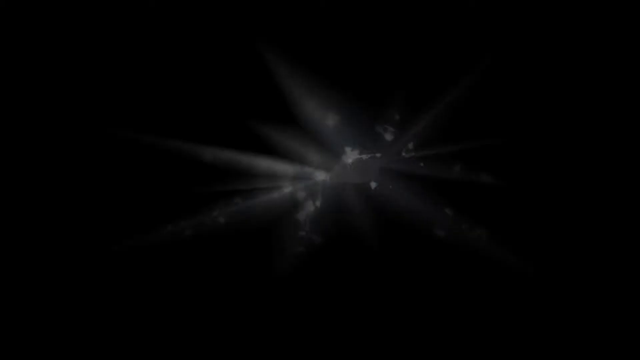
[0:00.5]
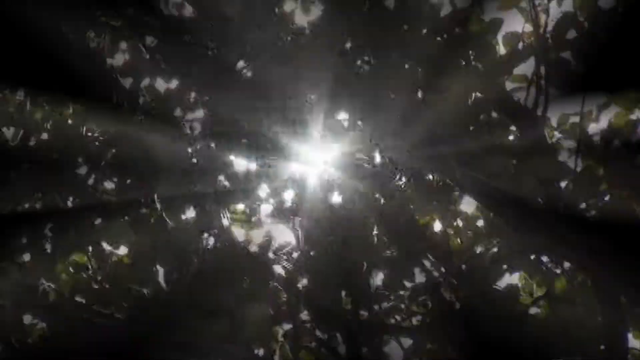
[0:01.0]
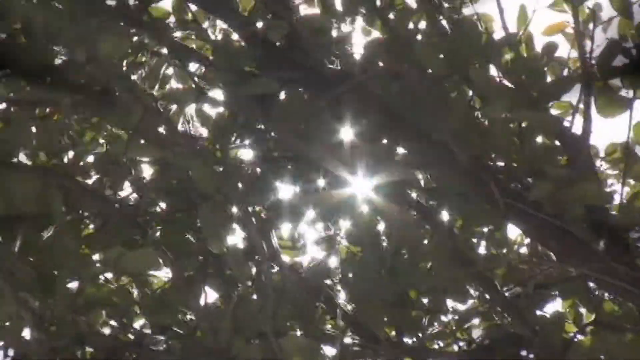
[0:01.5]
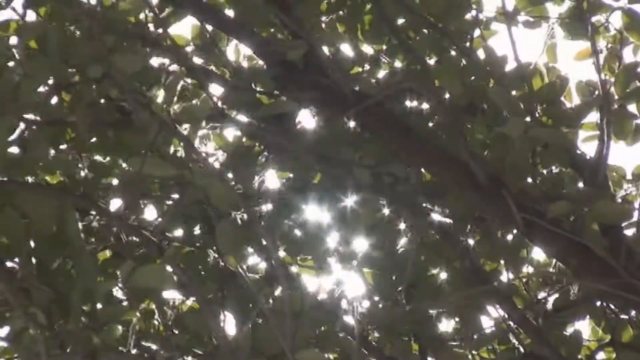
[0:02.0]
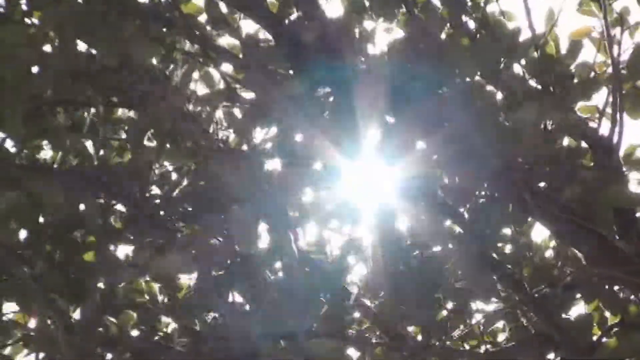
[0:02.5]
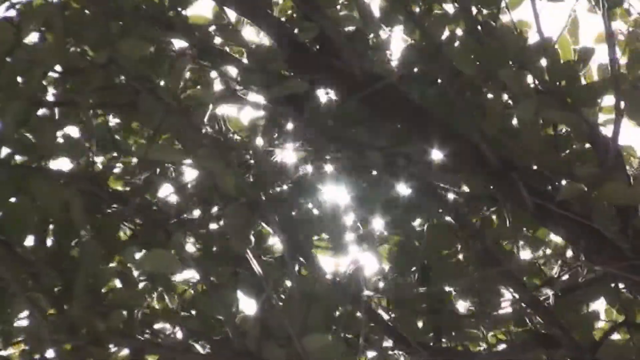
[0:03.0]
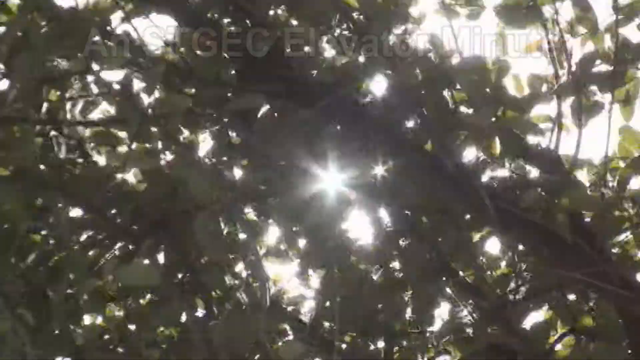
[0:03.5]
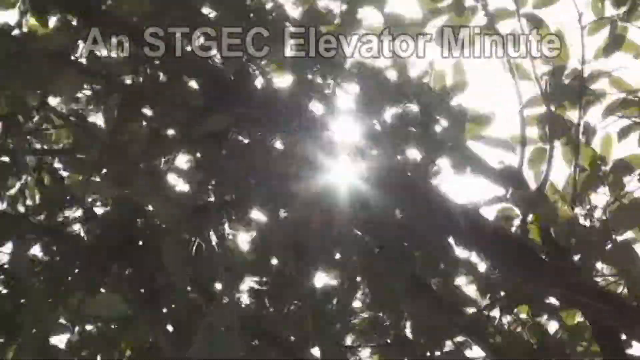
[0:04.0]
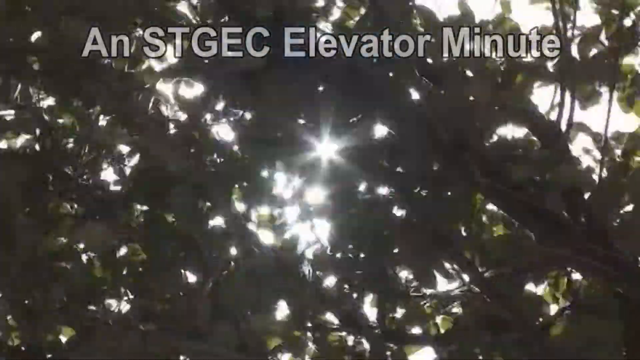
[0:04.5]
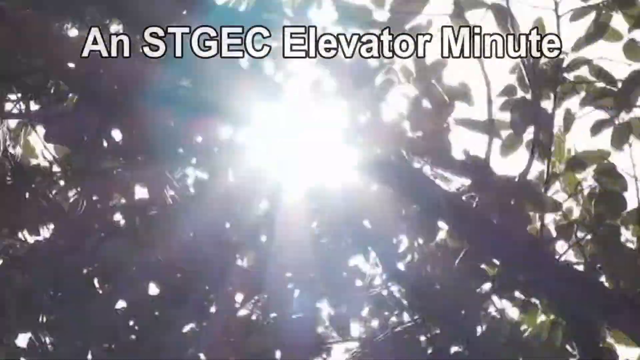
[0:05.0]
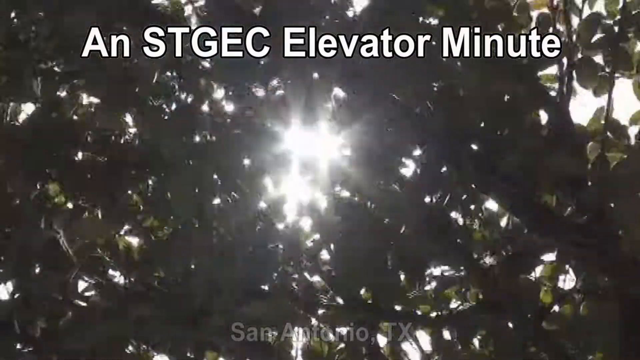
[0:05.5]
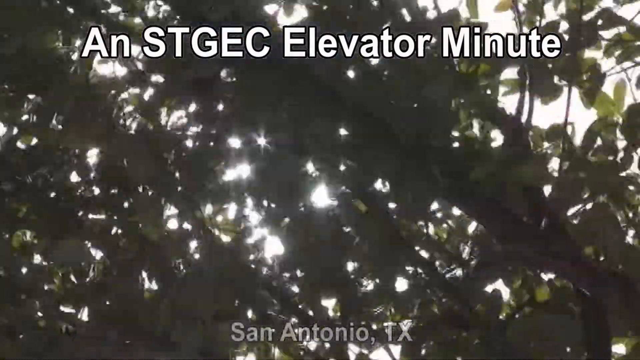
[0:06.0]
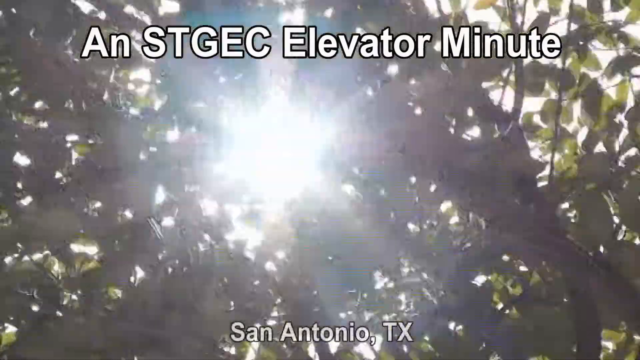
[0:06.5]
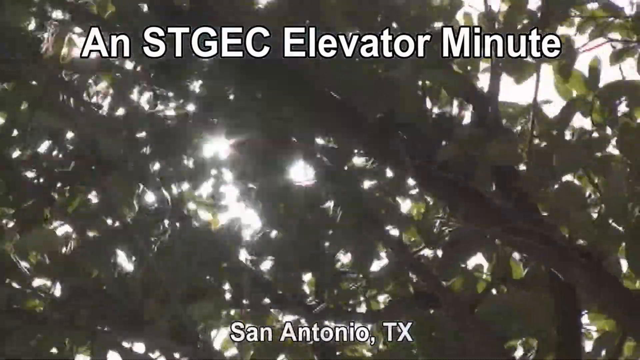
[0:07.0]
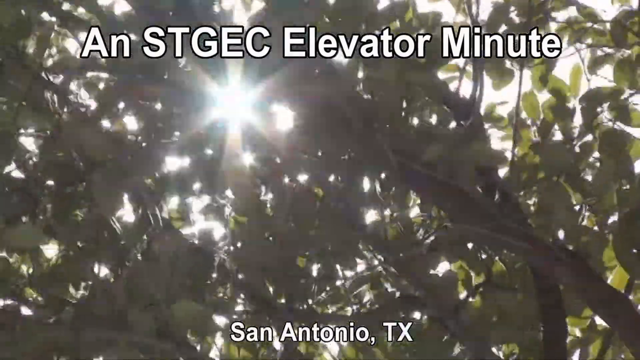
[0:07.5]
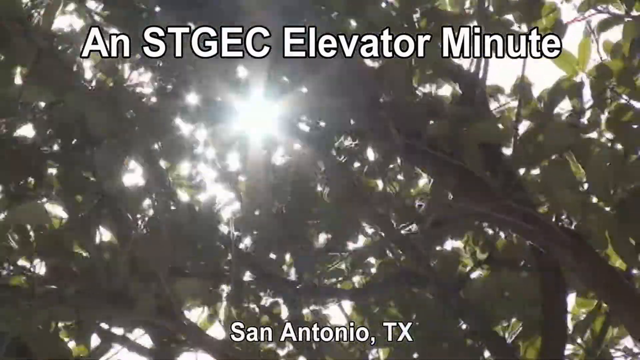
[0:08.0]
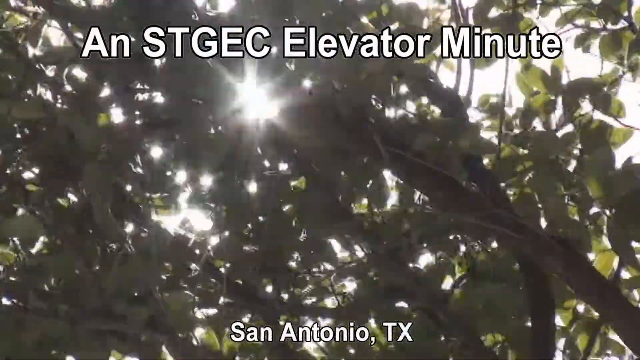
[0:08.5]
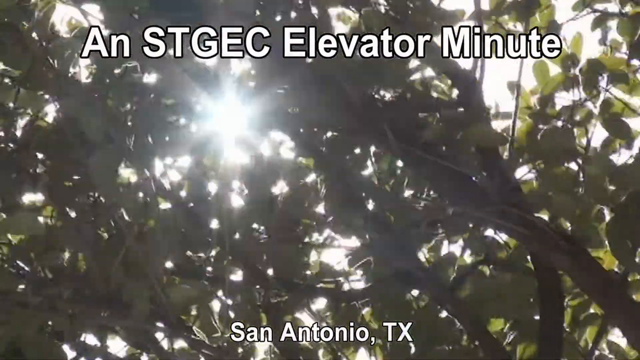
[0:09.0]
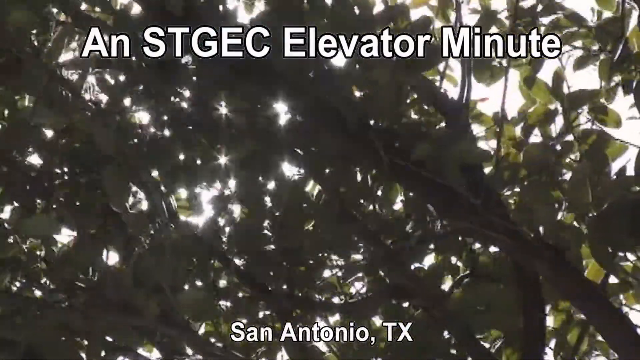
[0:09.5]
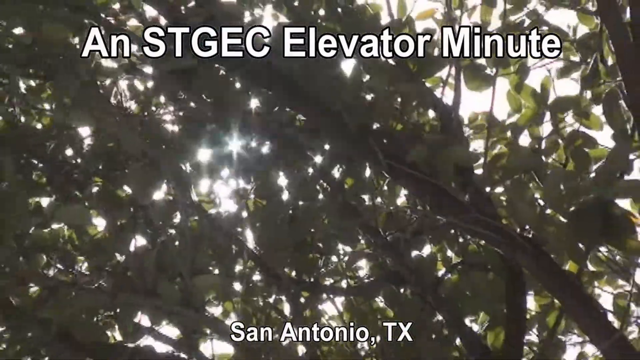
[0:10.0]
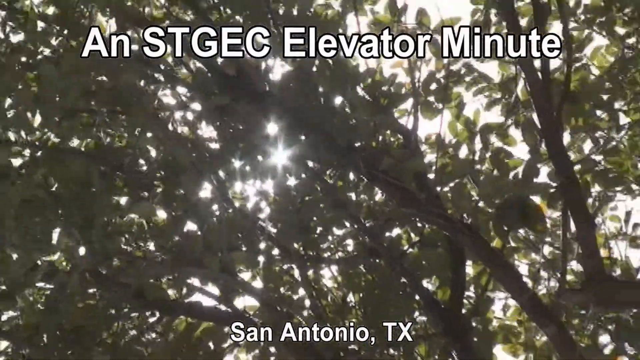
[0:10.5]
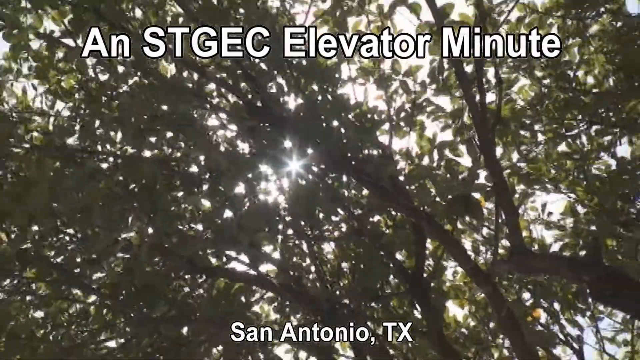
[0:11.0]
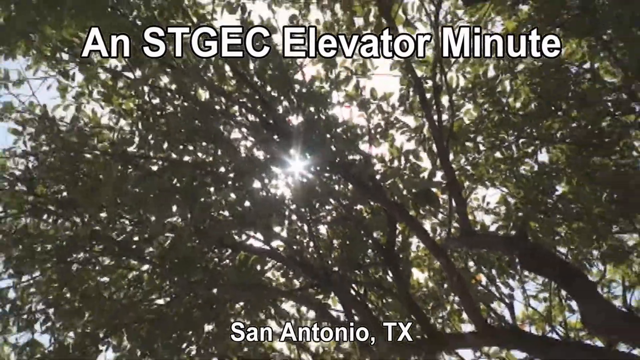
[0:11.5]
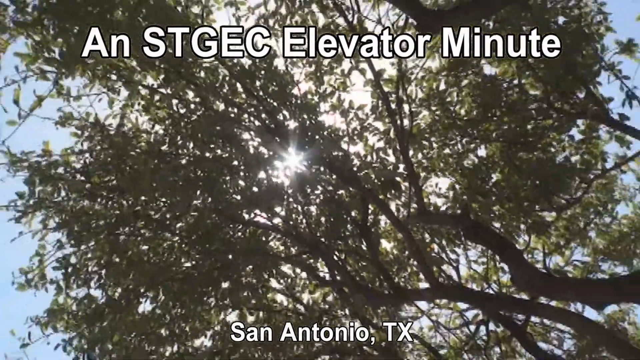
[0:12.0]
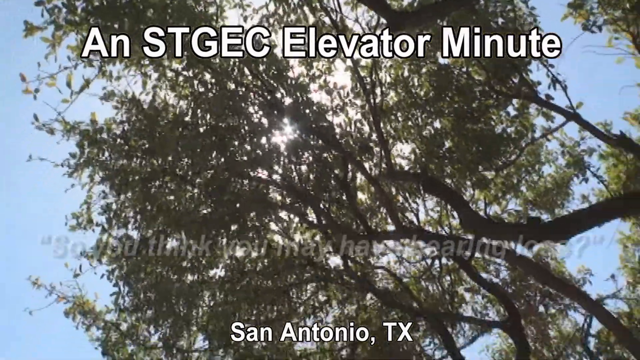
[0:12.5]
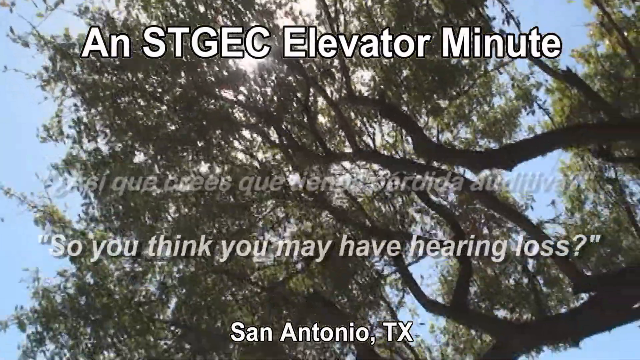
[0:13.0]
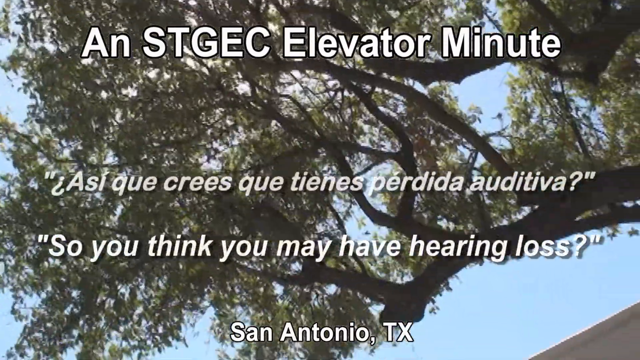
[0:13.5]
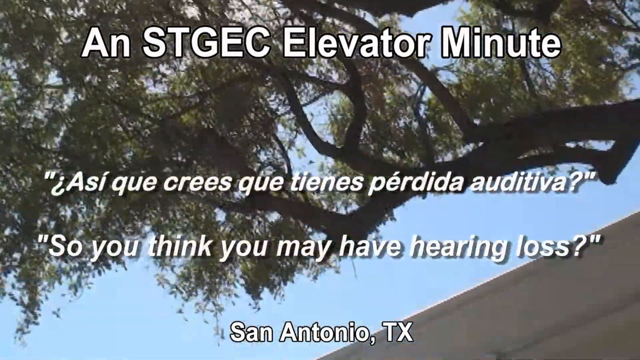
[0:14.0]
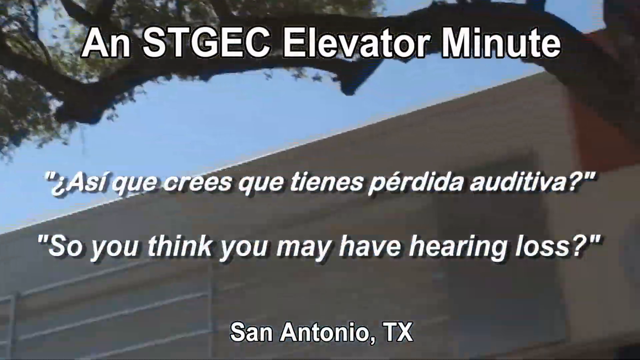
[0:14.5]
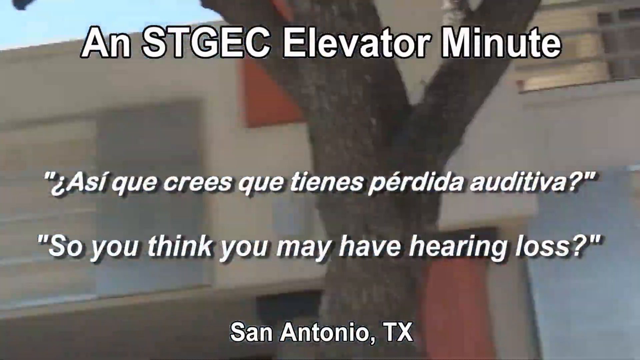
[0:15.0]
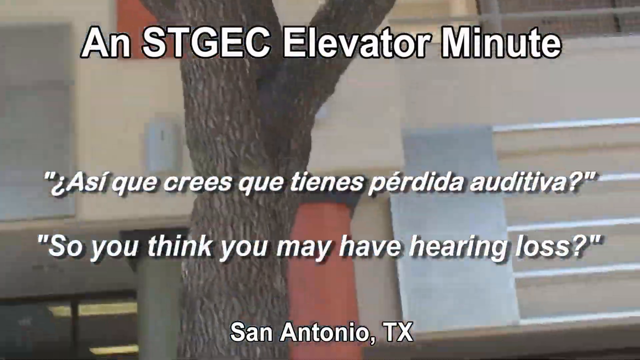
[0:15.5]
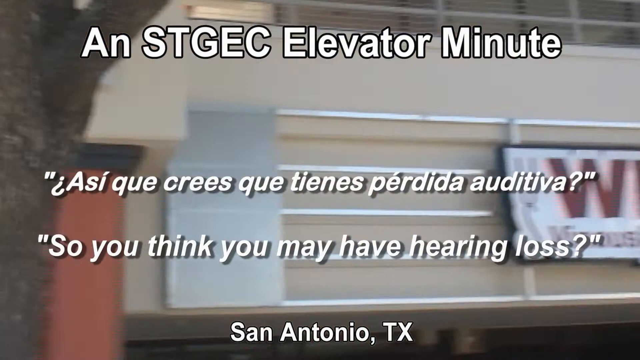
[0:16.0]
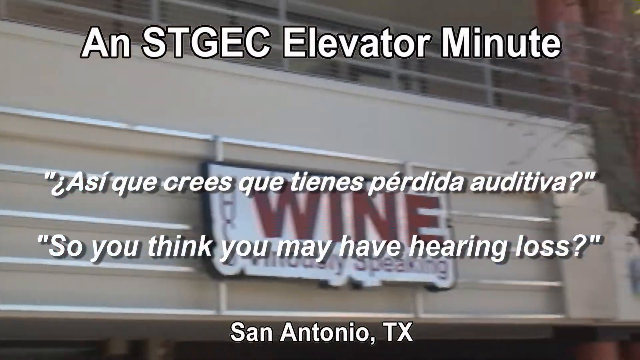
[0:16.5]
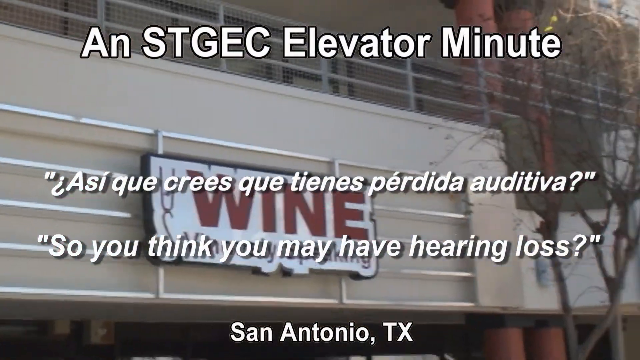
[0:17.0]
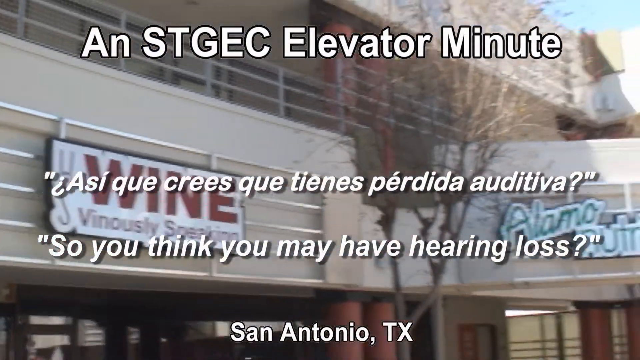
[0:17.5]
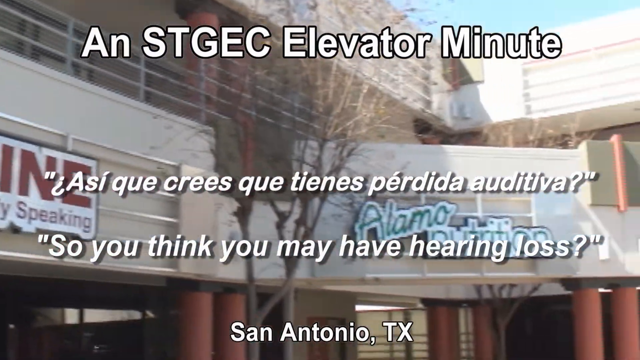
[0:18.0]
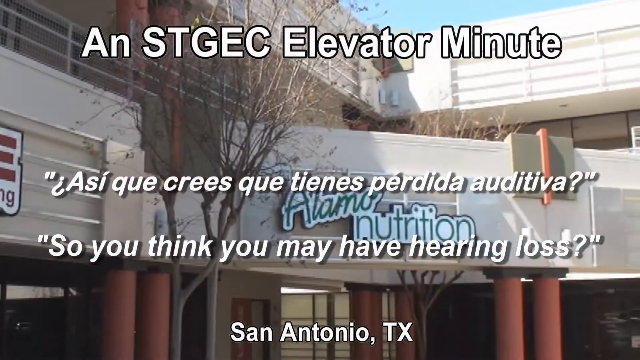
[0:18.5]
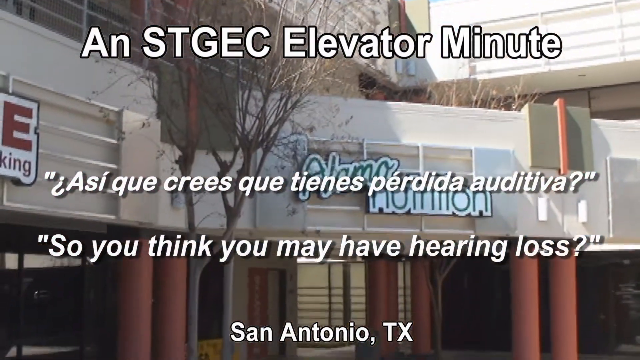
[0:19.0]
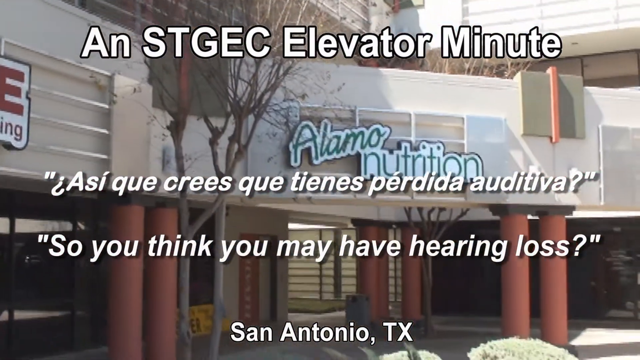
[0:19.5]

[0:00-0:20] The video opens on a black screen, then shows a branch with a leaf moving back and forth in the wind. The view zooms out to reveal a gallery, which has a place called Animal Nutrition. On the left is one of the speakers. Text appears on screen: first a title, then two texts, one in Spanish and one in English; the English one reads "so do you think you may have hearing loss". There is a glimpse of a tree, followed by the entrances to a building with orange columns. The walls of the gallery are white, and light comes from inside. Trees also grow in another spot; they are much smaller than the two behind.